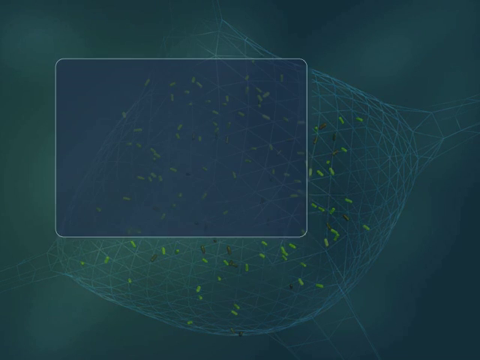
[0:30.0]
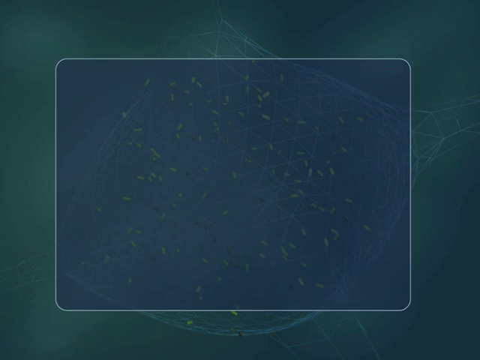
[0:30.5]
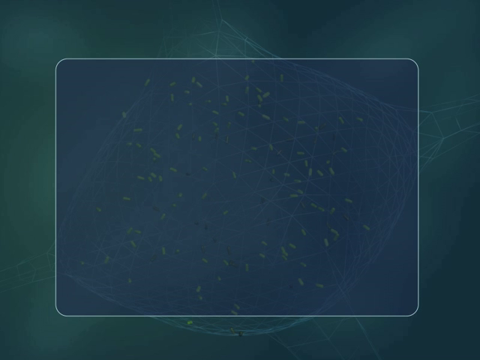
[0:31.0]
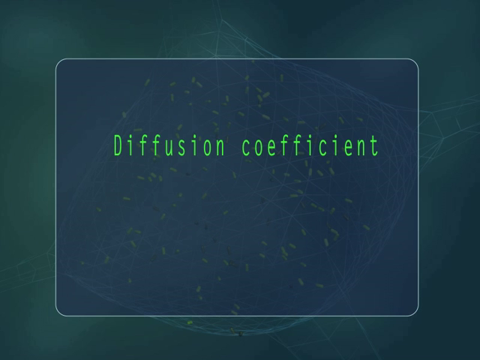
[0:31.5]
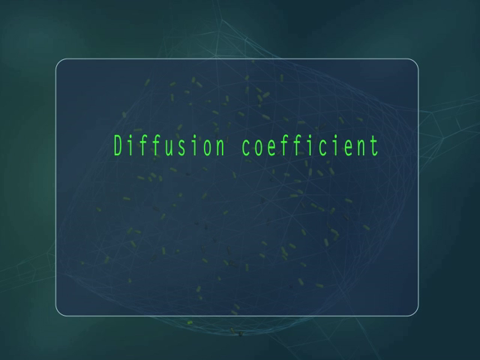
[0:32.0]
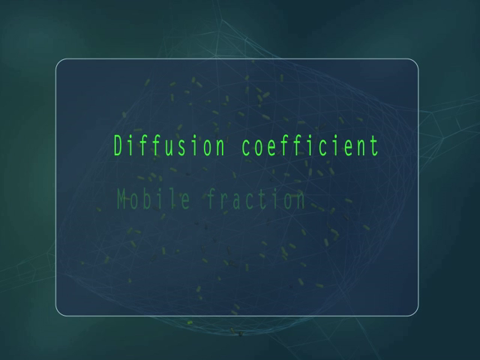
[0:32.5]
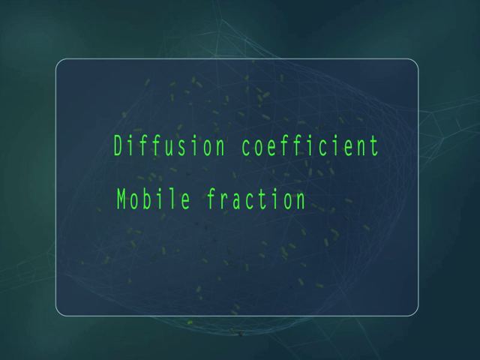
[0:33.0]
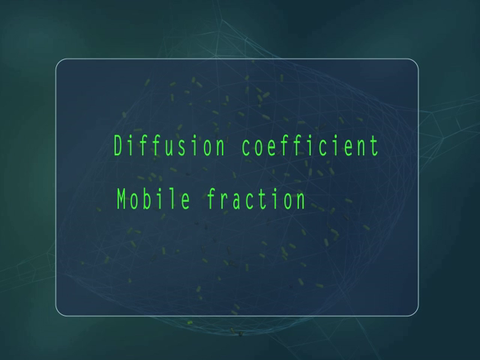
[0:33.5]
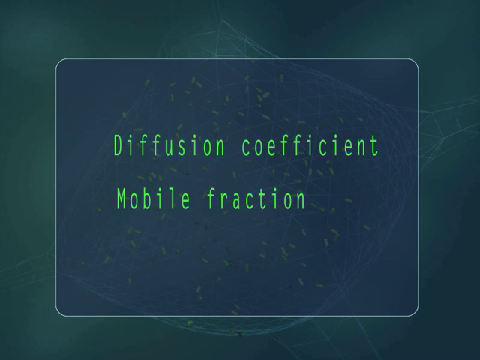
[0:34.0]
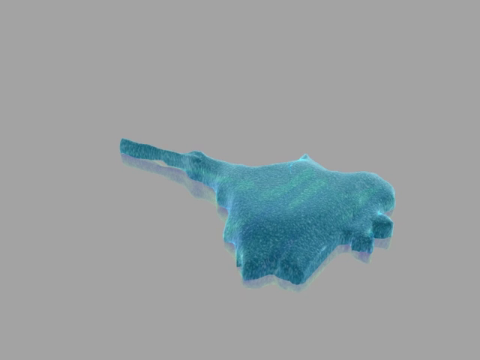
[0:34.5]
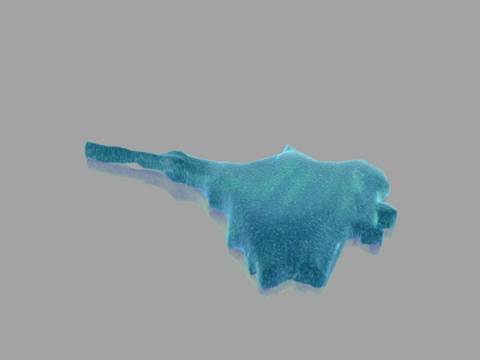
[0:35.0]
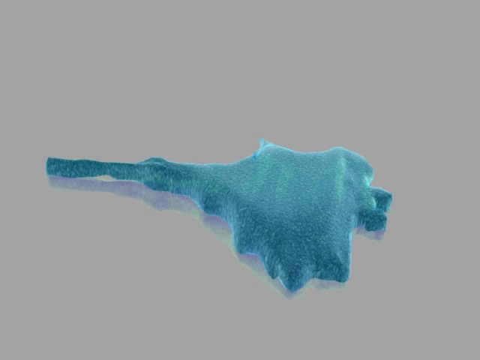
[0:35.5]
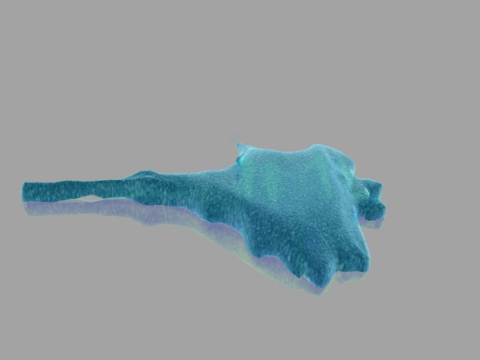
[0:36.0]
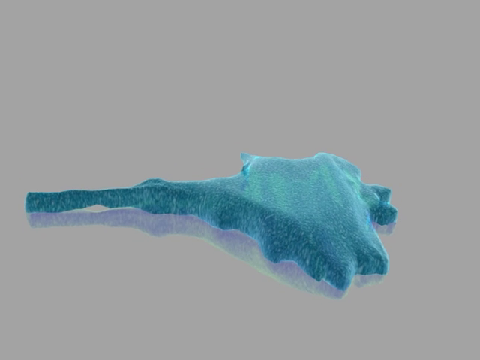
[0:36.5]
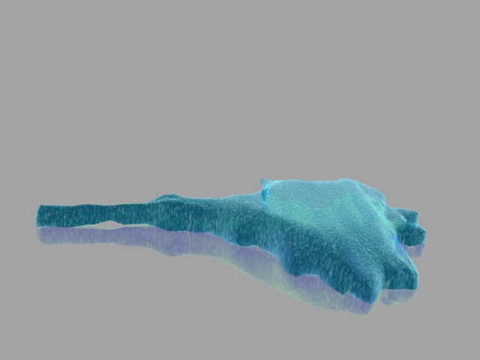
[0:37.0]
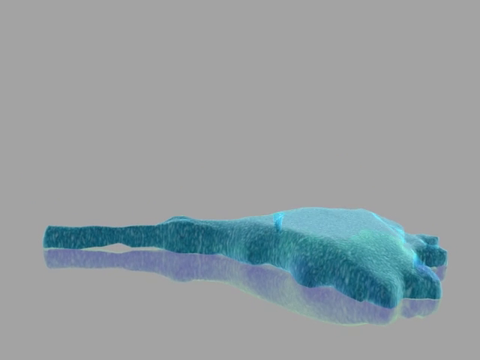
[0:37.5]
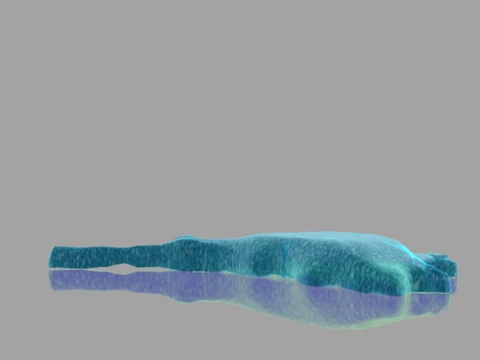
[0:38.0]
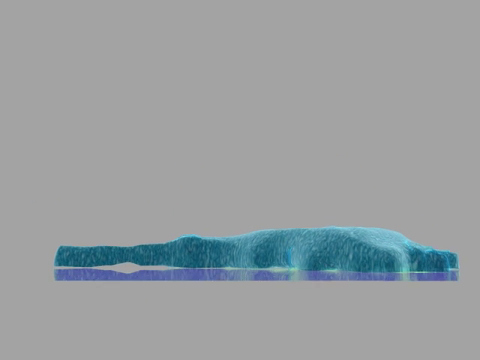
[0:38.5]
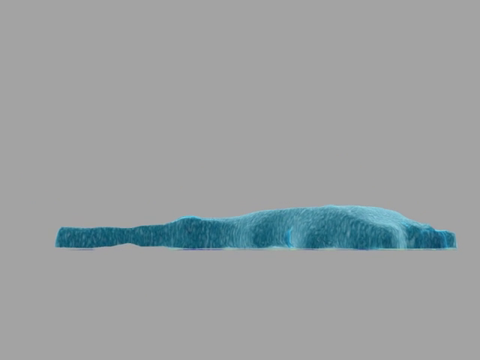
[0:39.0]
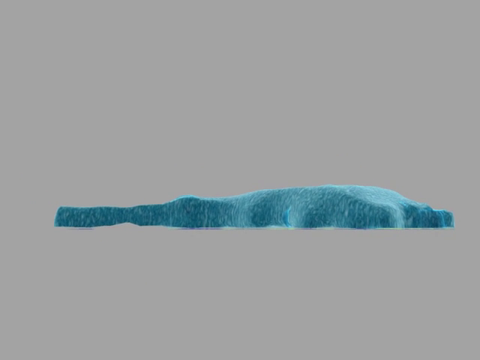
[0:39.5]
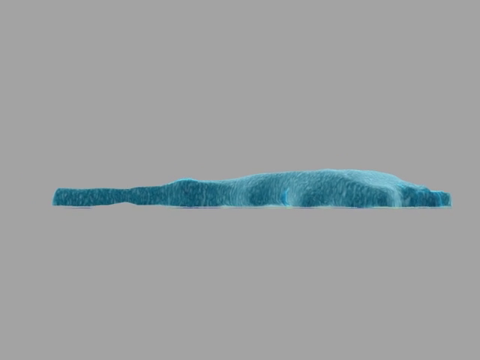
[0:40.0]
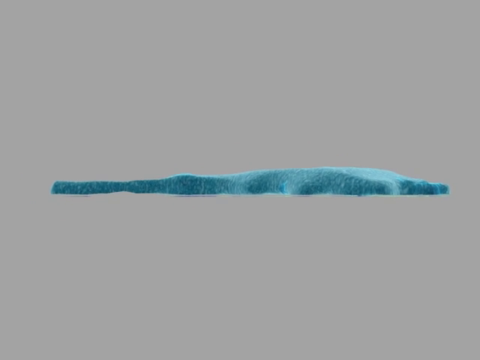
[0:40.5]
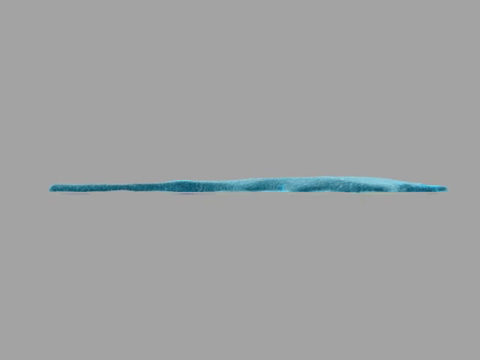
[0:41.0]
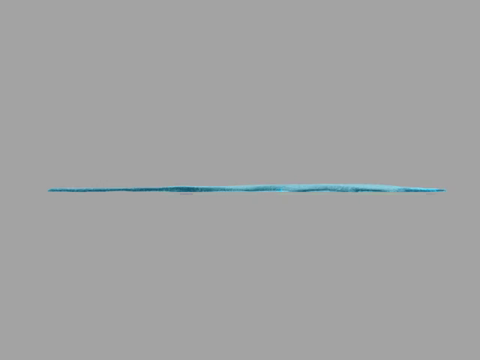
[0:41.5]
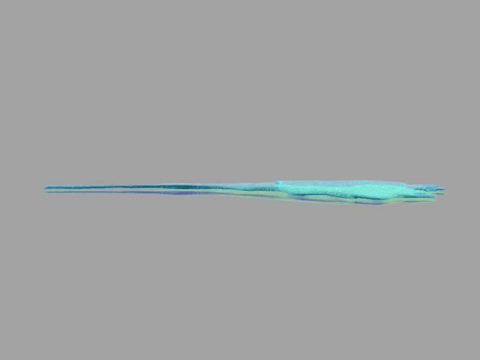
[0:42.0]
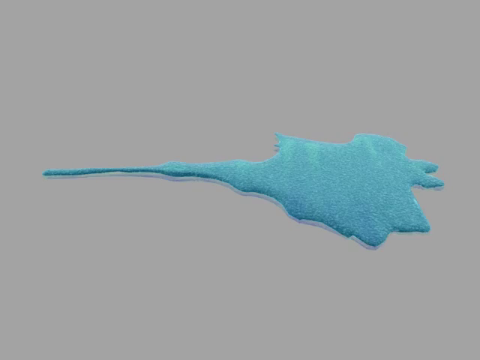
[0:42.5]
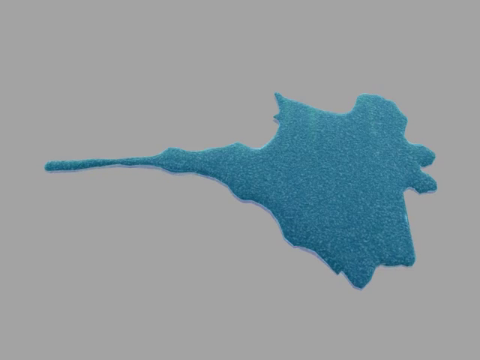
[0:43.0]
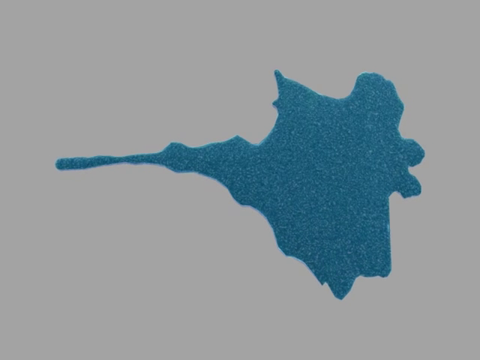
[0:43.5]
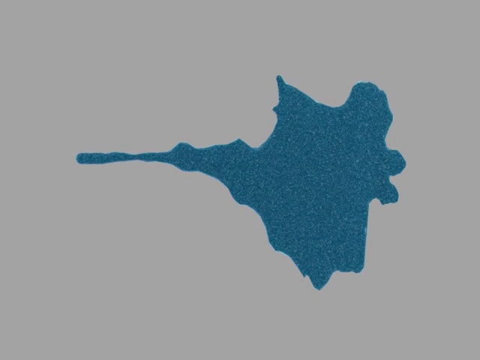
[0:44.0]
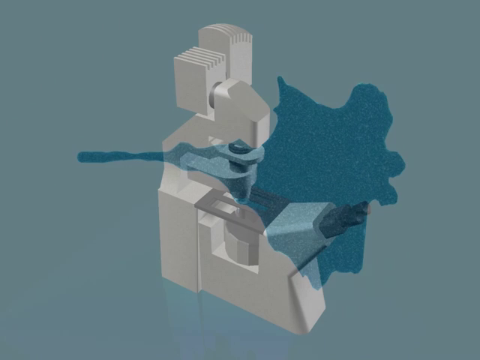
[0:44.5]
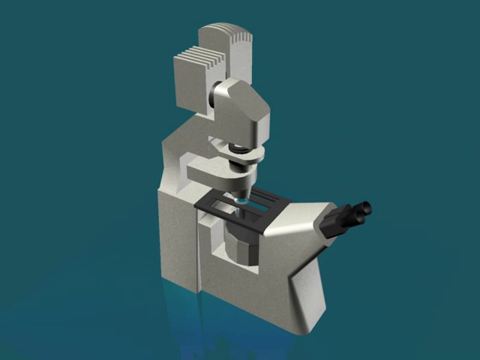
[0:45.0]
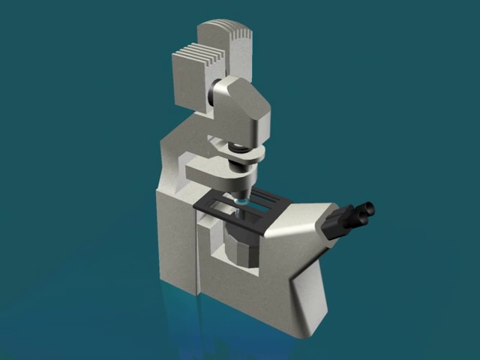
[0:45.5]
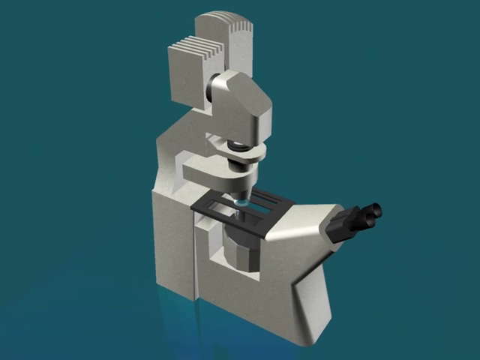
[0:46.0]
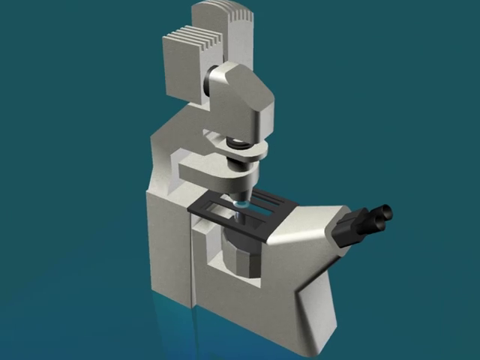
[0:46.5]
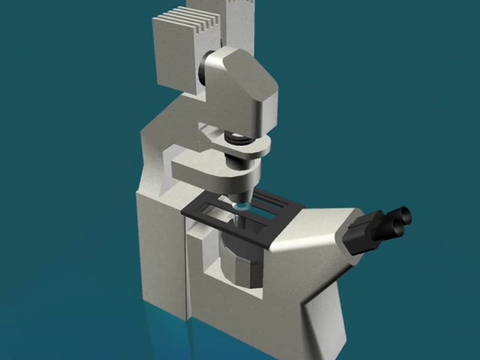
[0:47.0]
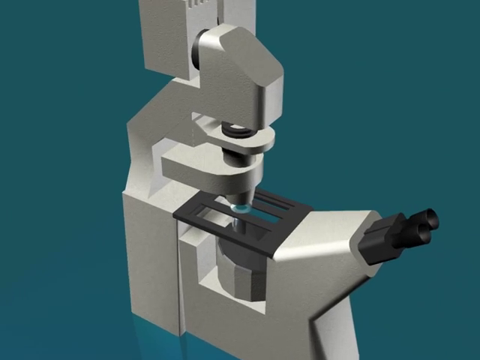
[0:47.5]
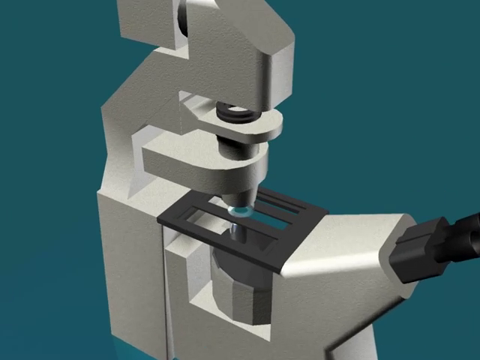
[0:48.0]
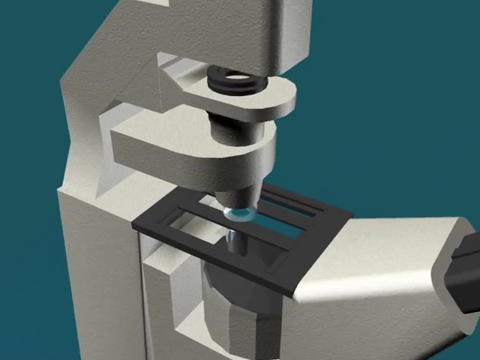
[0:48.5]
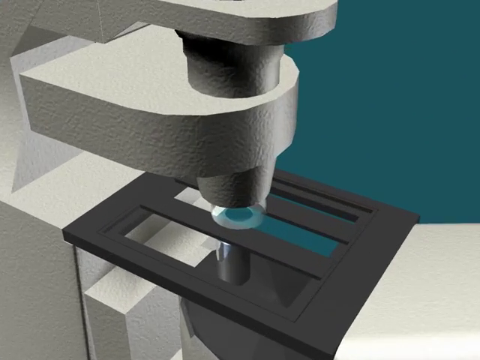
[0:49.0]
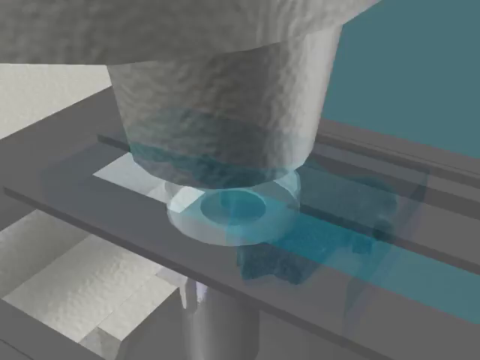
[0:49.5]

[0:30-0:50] A box appears concerning the diffusion coefficient and mobile fraction. There is something like a diagram, which the view zooms in on; it looks like a blue light diagram. The background is a purplish gray color. It shows something kind of like a puzzle piece, and it goes into something like a microscope. The box covers the whole structure.